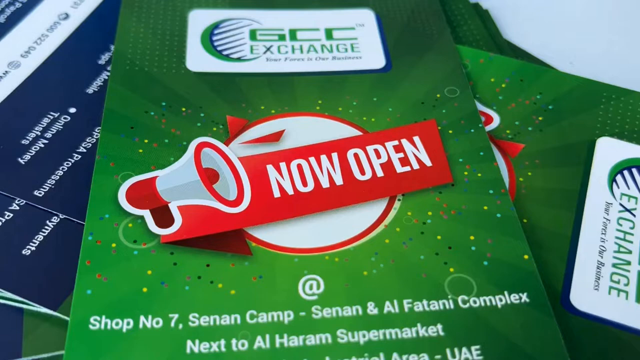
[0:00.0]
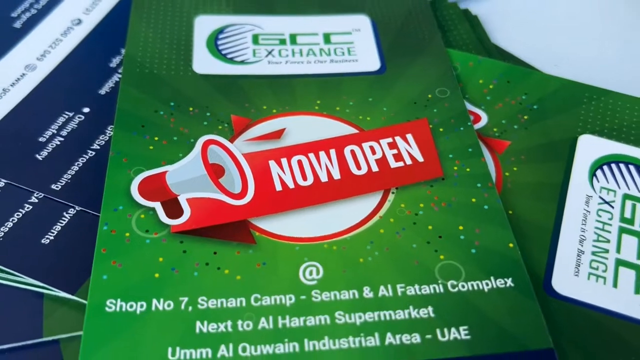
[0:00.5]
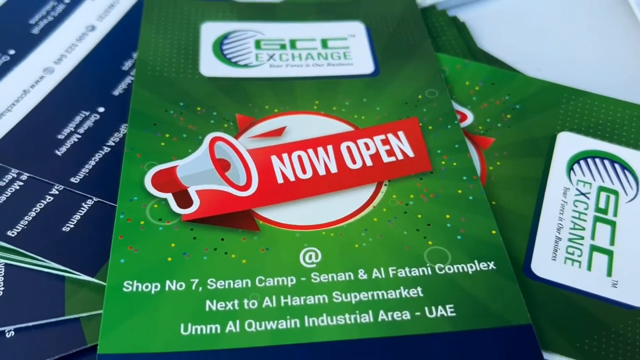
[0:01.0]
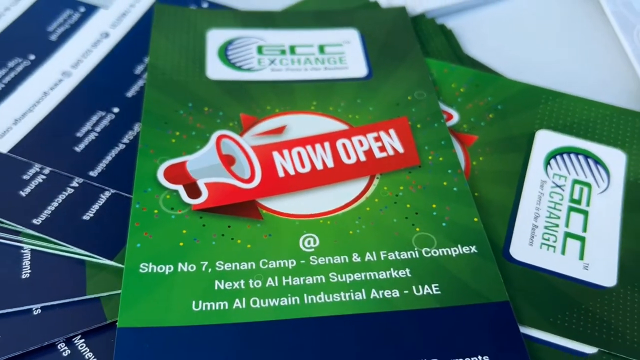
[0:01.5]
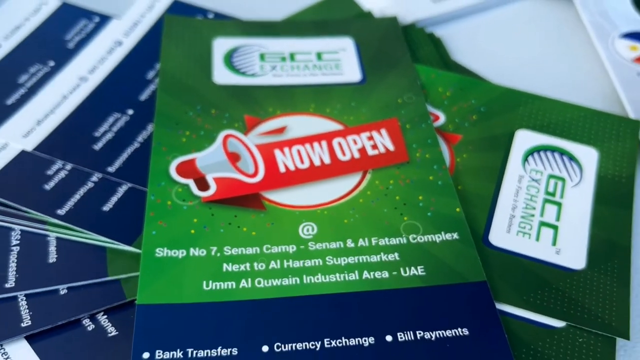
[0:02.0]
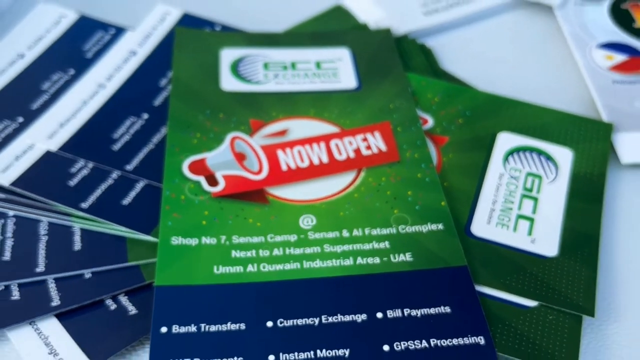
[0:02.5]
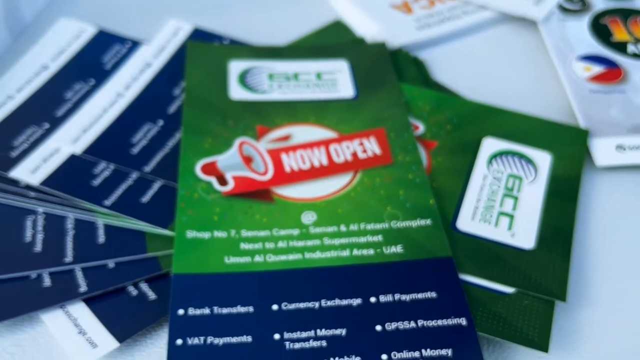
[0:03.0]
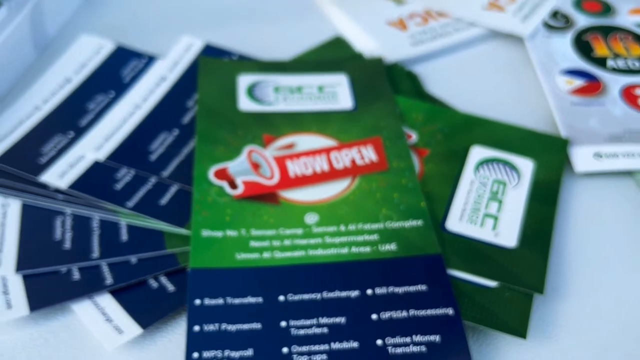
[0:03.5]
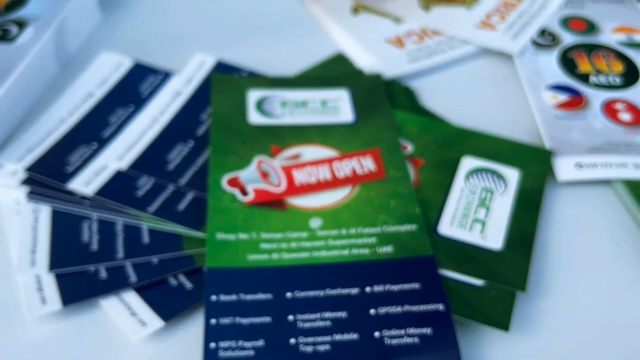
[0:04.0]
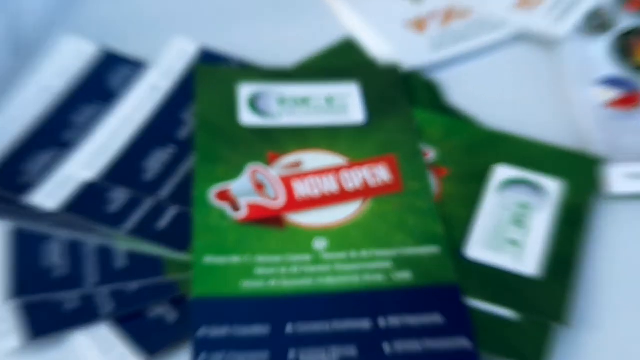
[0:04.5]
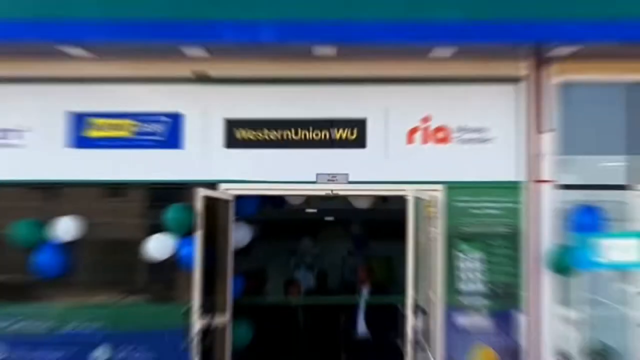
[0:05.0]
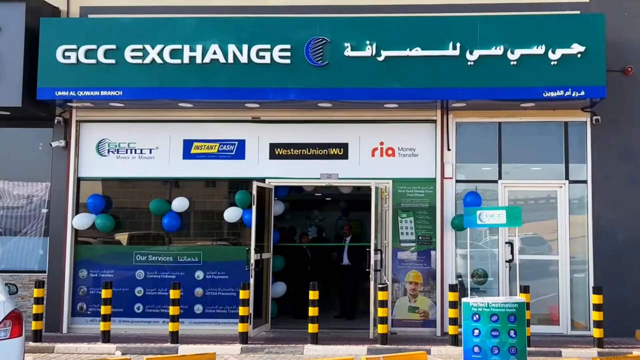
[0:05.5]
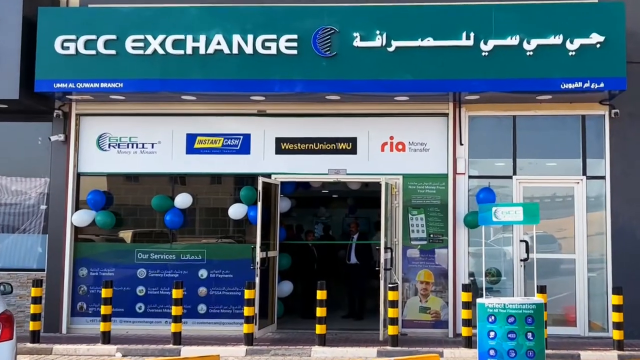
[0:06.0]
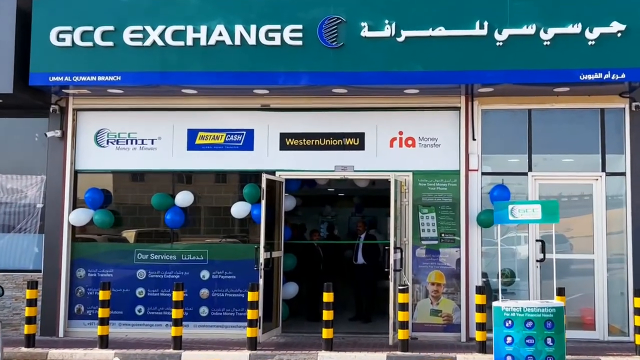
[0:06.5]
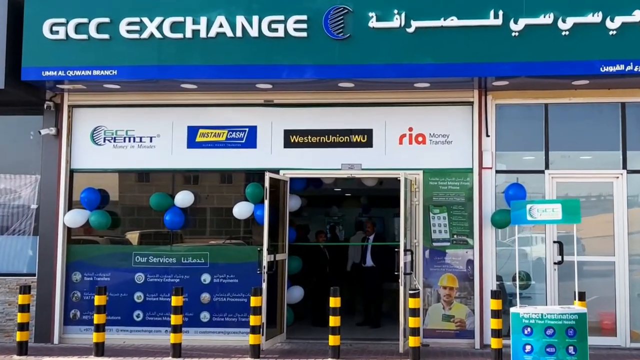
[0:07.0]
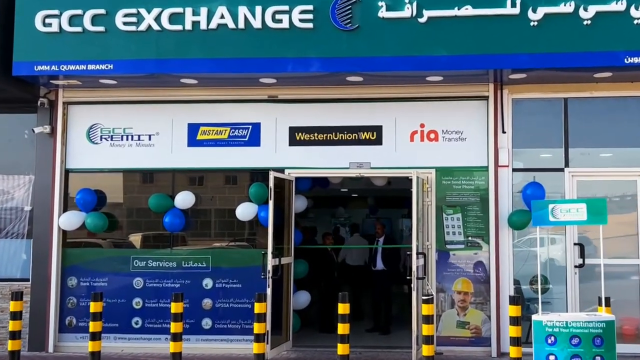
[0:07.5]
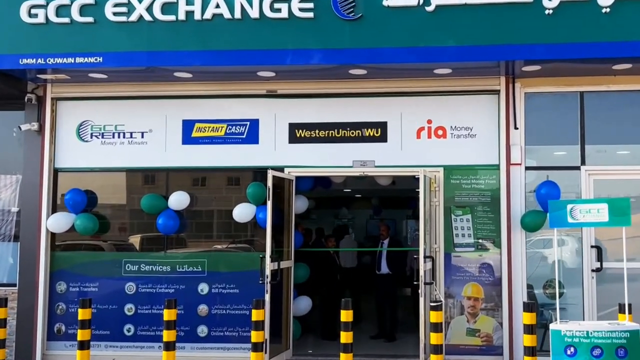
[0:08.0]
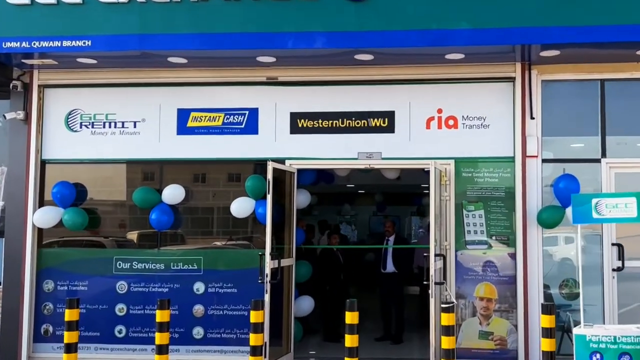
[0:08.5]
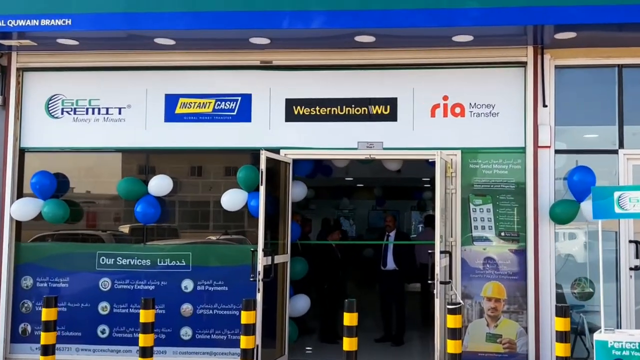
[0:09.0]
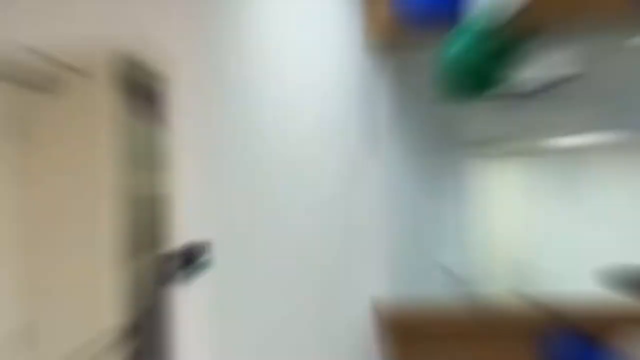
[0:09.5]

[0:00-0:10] The video opens on text reading "GCC Exchange now open" as the camera slowly zooms out. More text reads "Shop No. 7, Sinan Camp, Sinan and Al-Fatani Complex, next to Al-Haram Supermarket, UMM Al Quwain Industrial Area." The video cuts to a view of the GCC Exchange store with someone walking in slowly, then cuts to a partial view of the inside of the store, decorated with many balloons in blue, dark green and white.